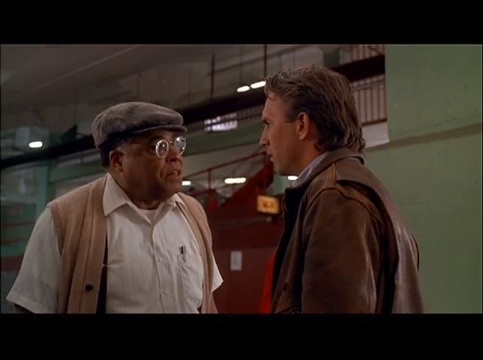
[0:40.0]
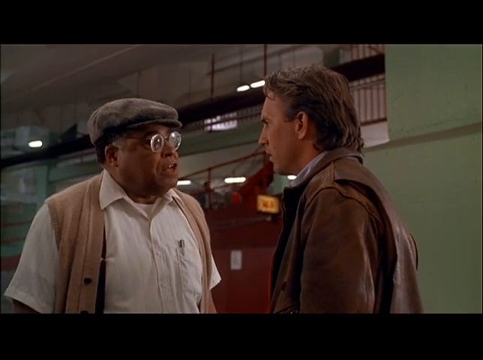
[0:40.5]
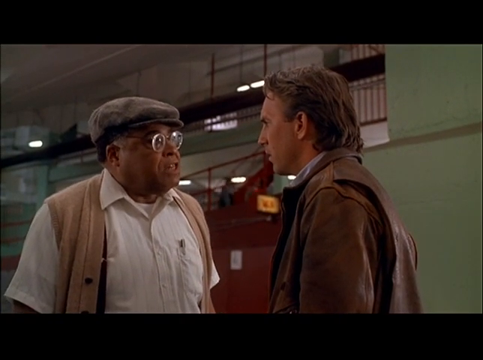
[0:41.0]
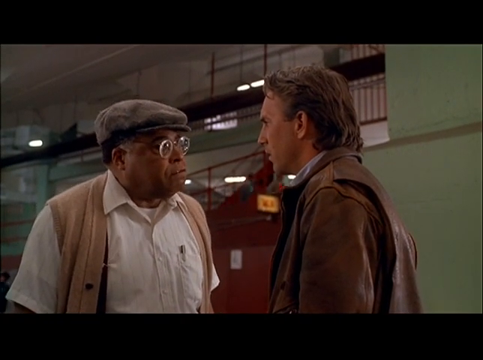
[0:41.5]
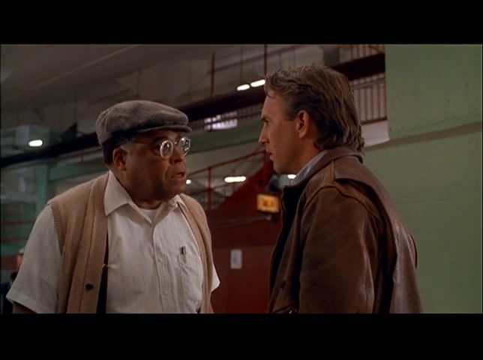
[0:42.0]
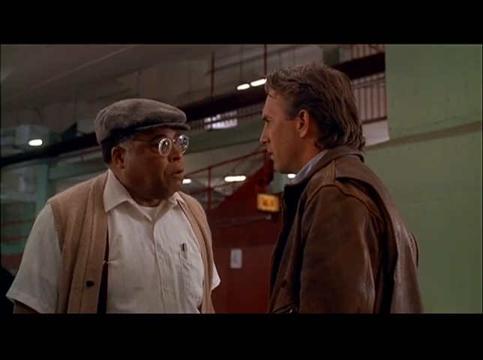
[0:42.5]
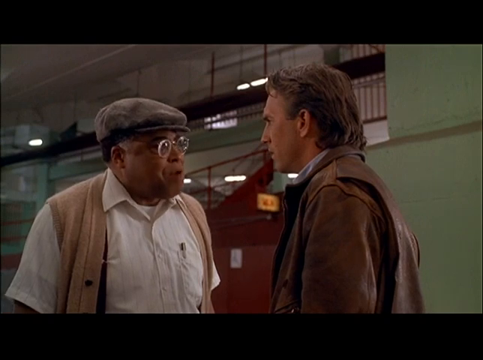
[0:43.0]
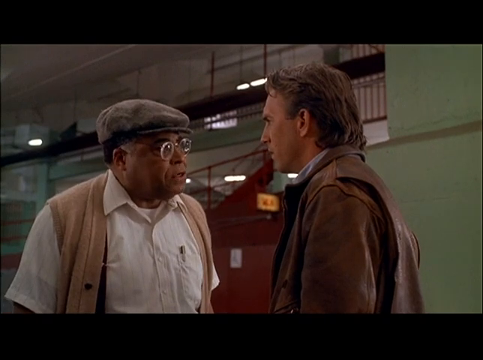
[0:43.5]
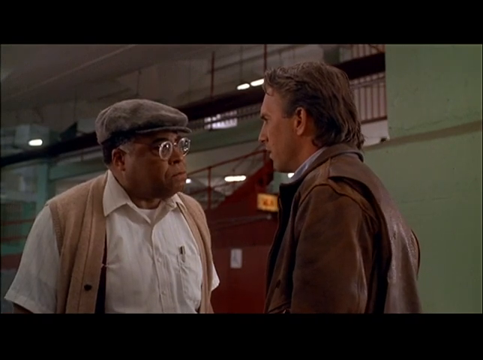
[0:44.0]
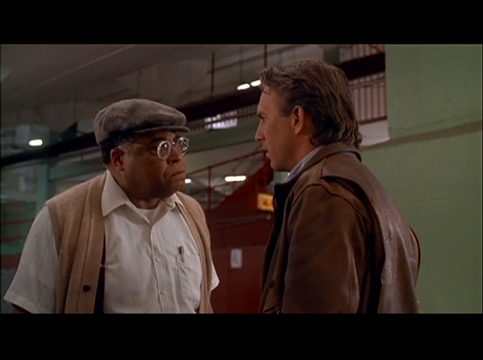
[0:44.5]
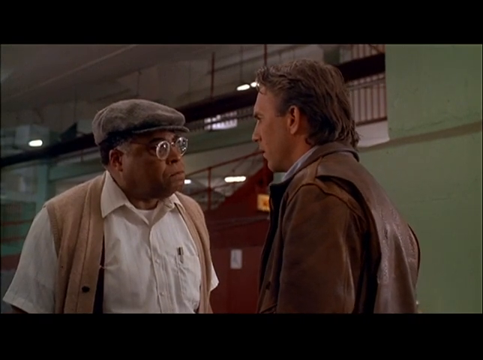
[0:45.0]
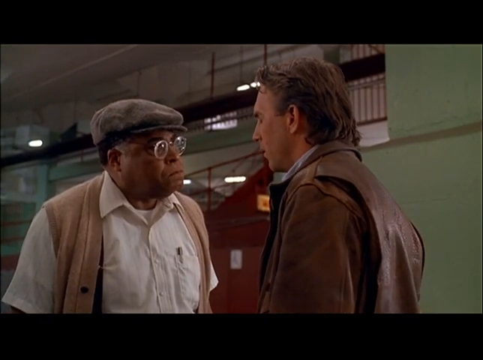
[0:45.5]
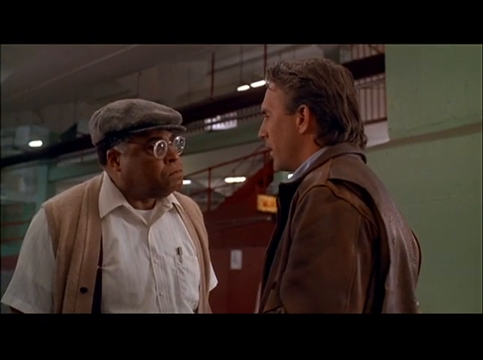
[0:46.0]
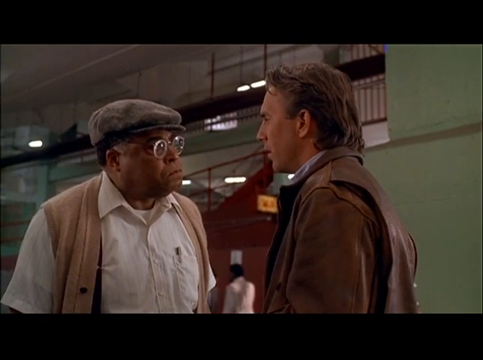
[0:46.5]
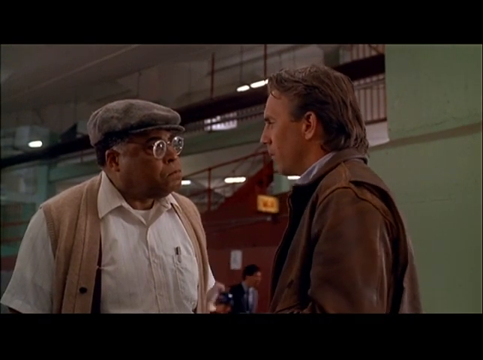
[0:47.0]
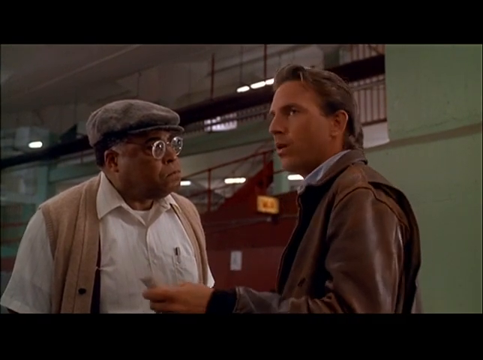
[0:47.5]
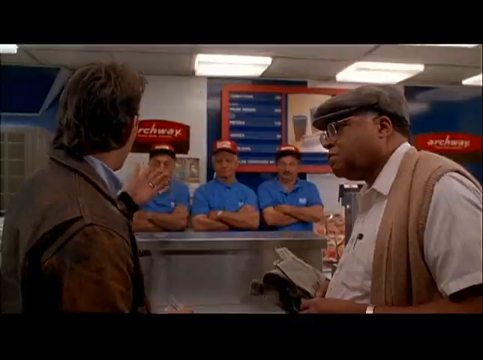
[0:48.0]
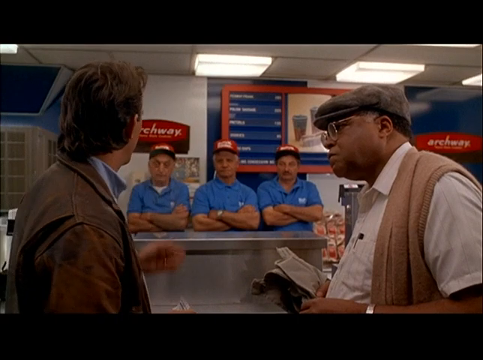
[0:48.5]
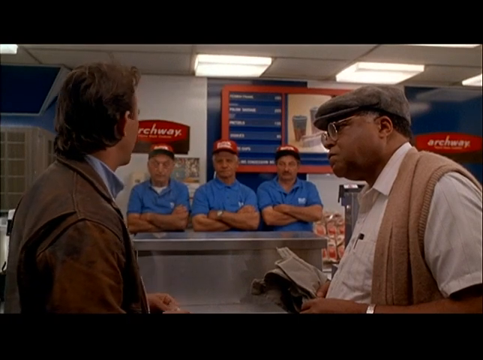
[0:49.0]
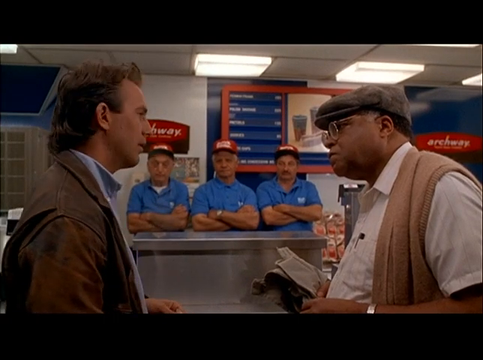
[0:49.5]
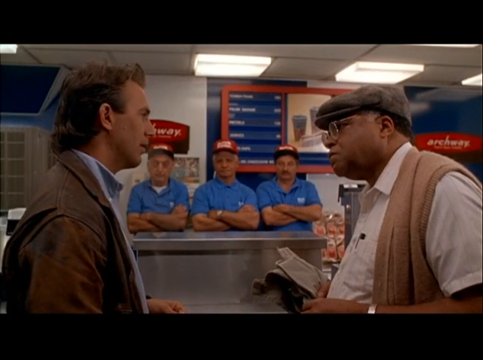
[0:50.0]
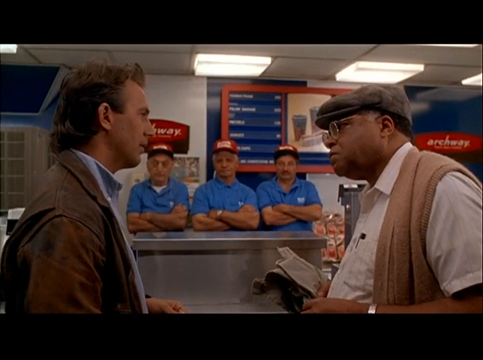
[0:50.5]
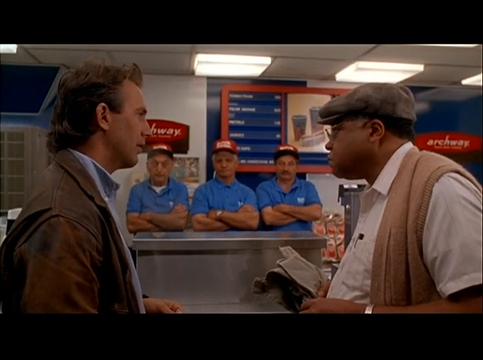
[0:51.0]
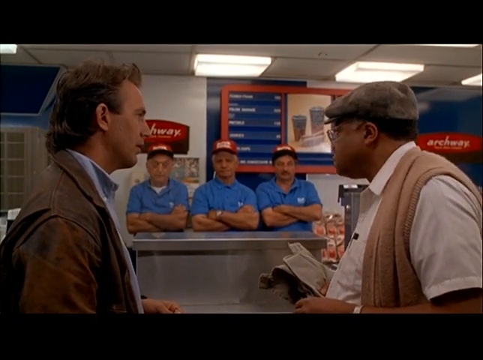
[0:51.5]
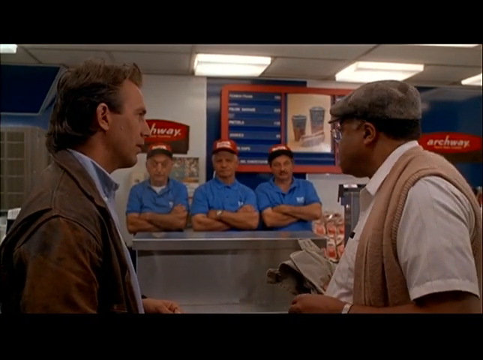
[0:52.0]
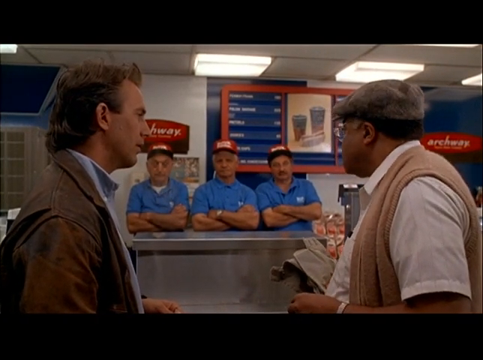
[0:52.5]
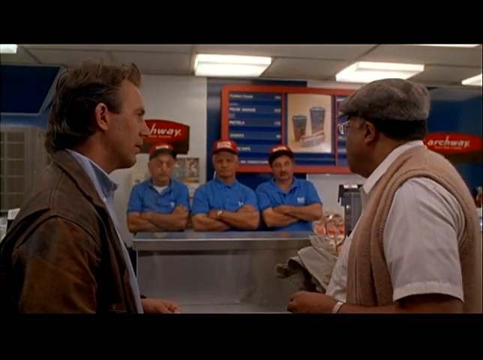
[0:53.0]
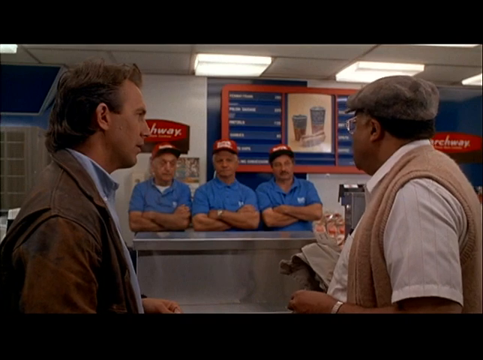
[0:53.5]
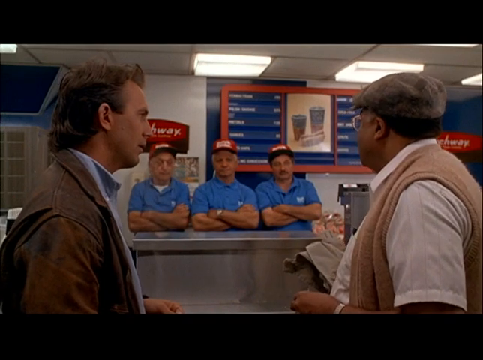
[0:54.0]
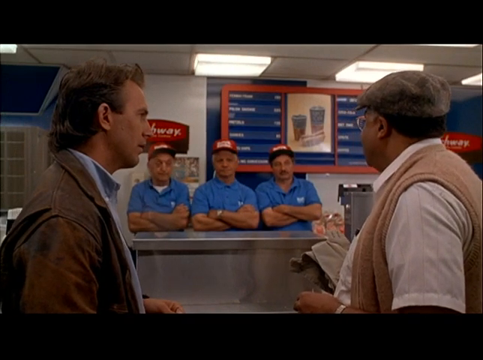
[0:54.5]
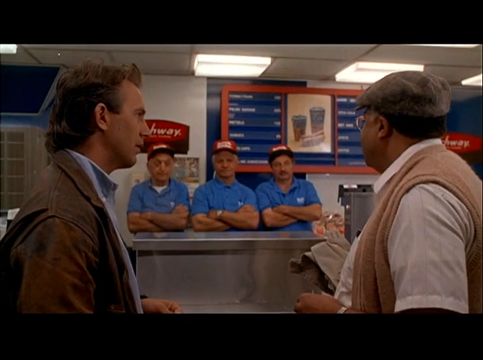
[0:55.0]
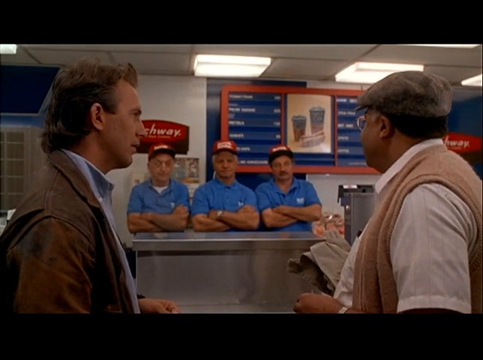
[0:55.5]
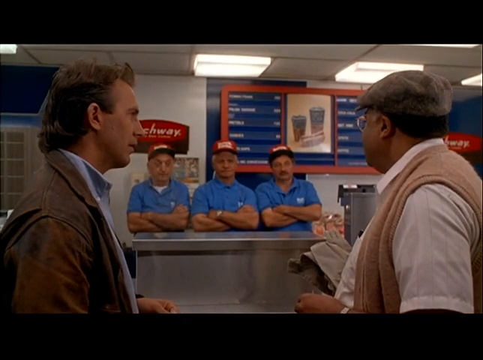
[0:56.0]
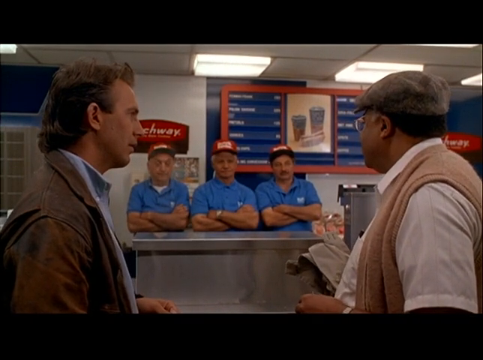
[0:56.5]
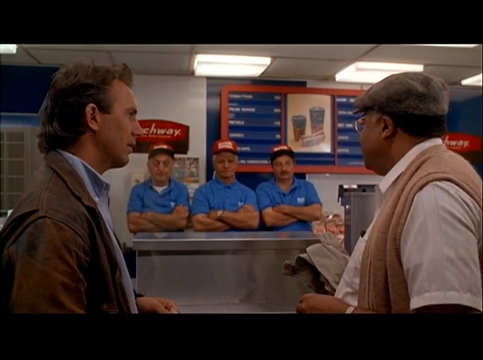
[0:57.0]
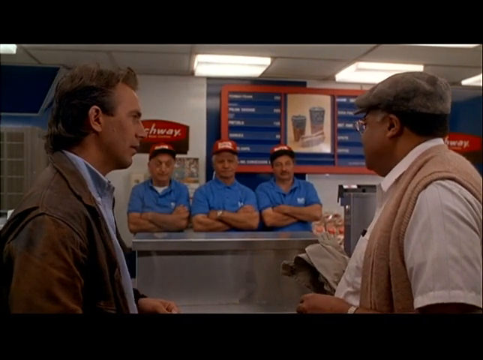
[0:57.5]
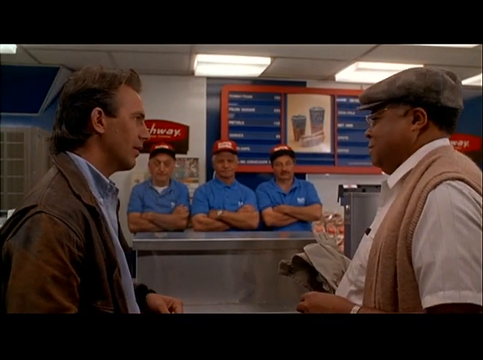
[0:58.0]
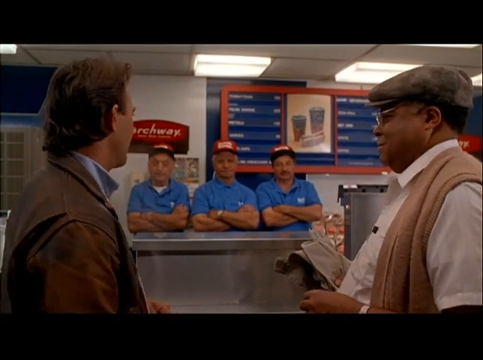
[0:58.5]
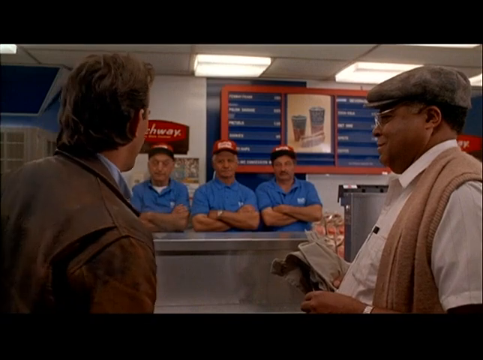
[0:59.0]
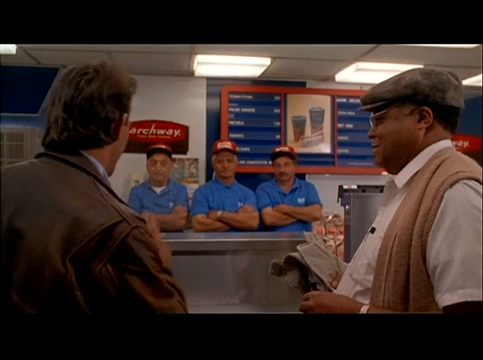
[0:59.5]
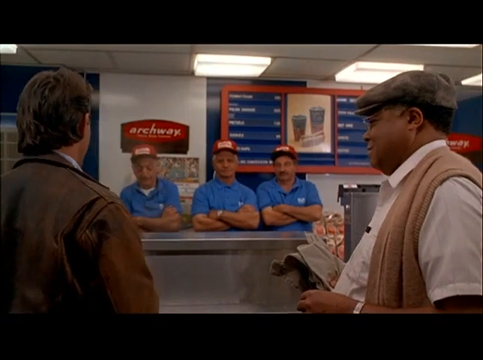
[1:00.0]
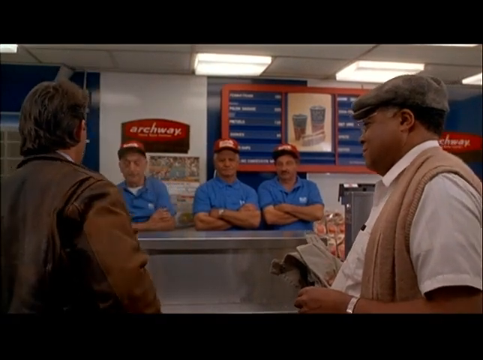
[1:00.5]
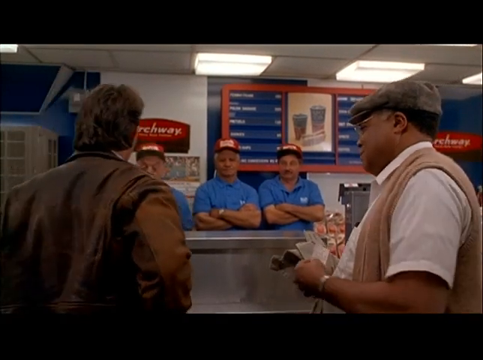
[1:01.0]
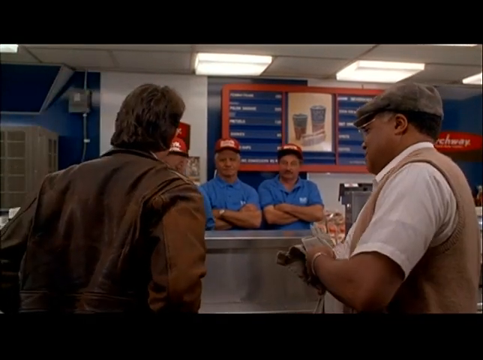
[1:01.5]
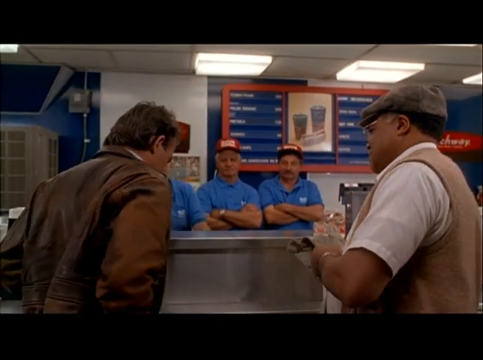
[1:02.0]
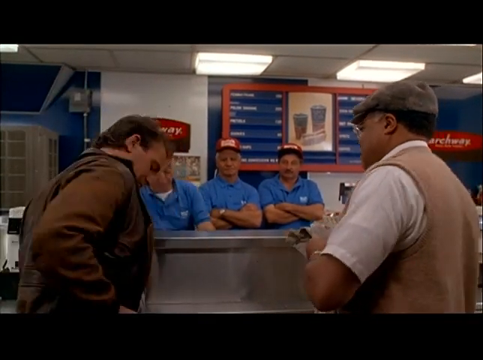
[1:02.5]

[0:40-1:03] Two adult men are fairly close up in the frame, appearing to be outside a multi-story building. On the left side of the screen is a man of African descent who looks like James Earl Jones, wearing a gray cap, glasses, and a white button-up shirt with a light brown or tan vest over it; suspenders are visible underneath the vest. To his right, about a foot in front of him, is a Caucasian man who also looks like Kevin Costner, with kind of brownish blonde hair that is mostly chocolate brown, wearing a brown leather bomber jacket over a blue dress shirt or button-up shirt and khaki pants with a brown or black belt. The man of African descent talks to the Caucasian man, who shakes his head after he says something, indicating no. The Caucasian man then talks to the man of African descent and points or gestures over to three men standing behind a counter with their arms crossed.